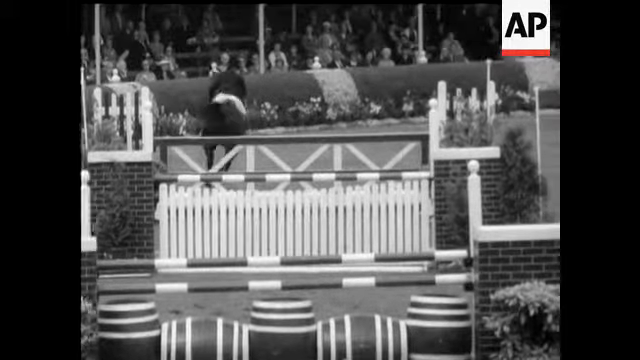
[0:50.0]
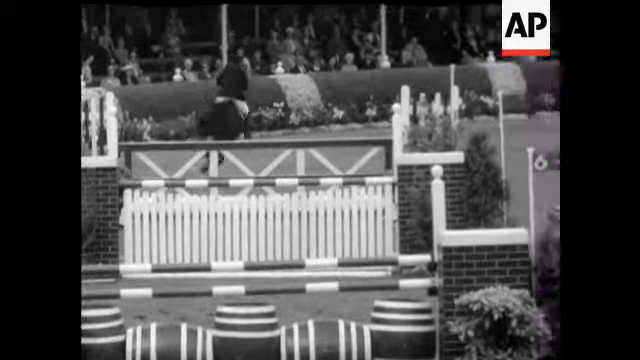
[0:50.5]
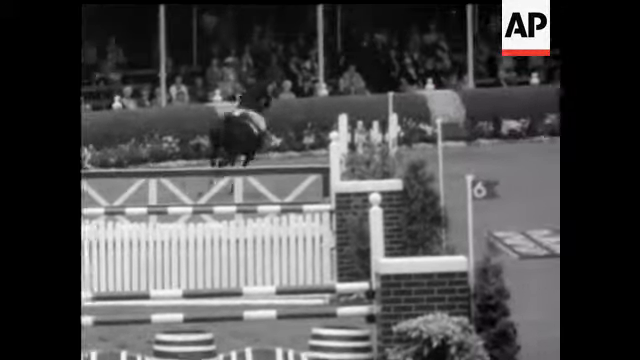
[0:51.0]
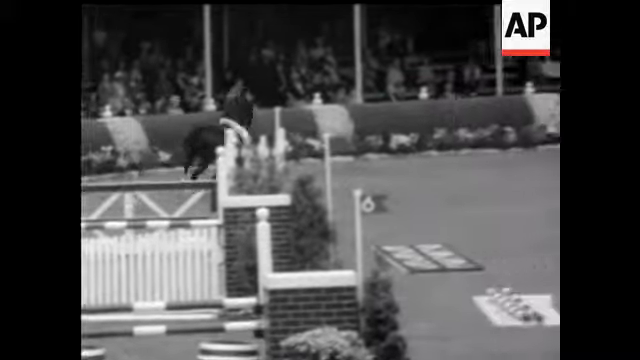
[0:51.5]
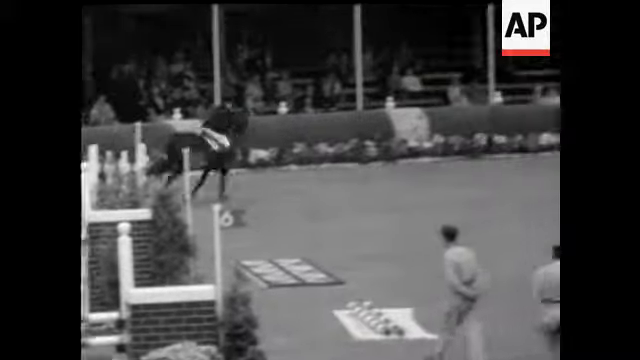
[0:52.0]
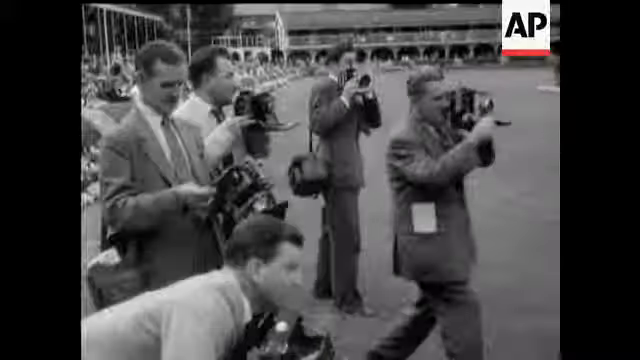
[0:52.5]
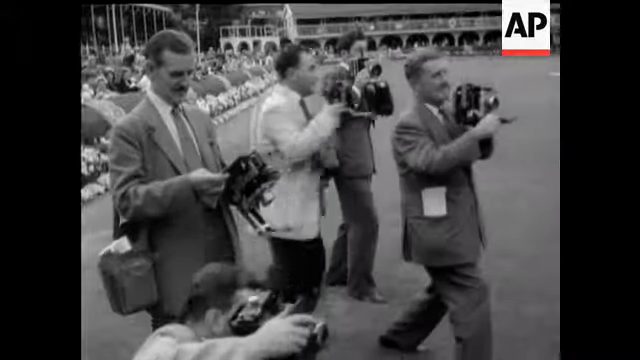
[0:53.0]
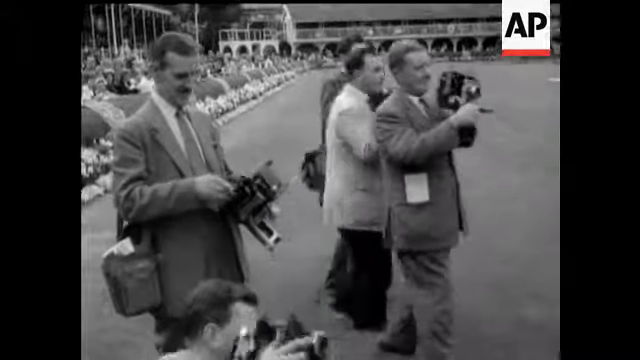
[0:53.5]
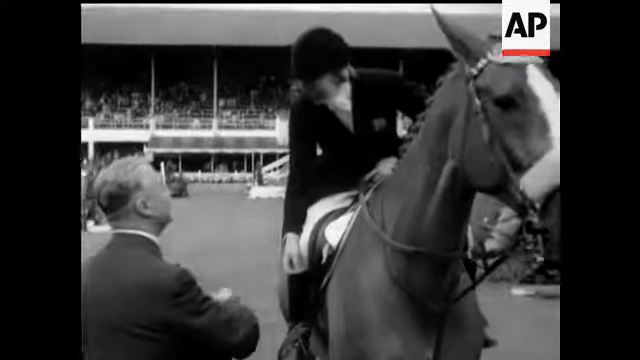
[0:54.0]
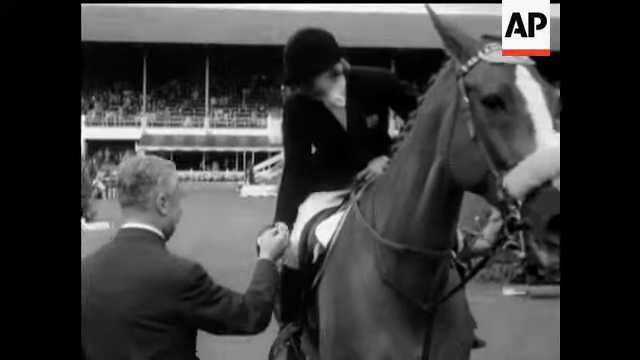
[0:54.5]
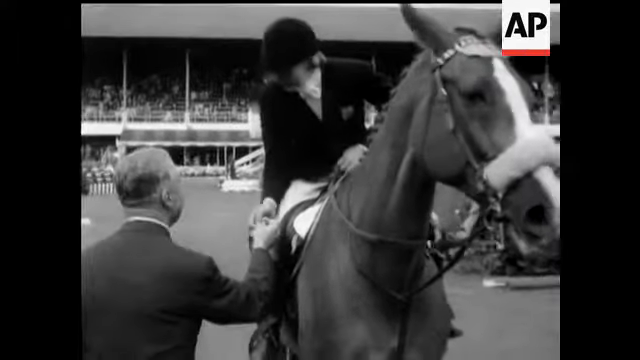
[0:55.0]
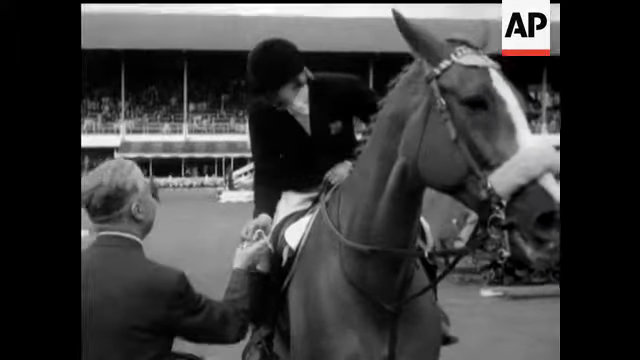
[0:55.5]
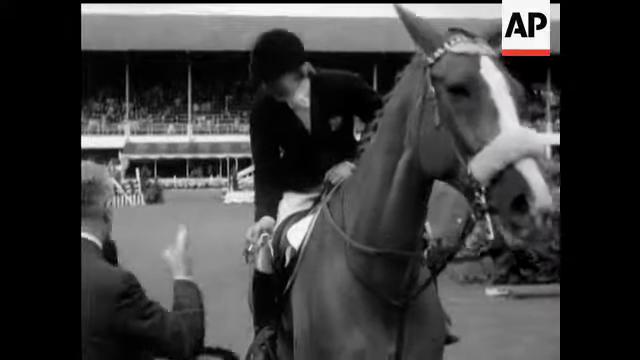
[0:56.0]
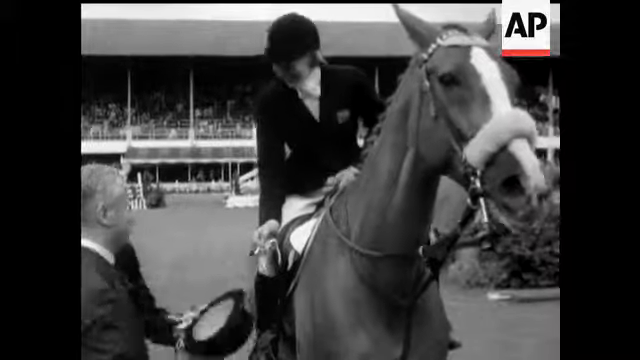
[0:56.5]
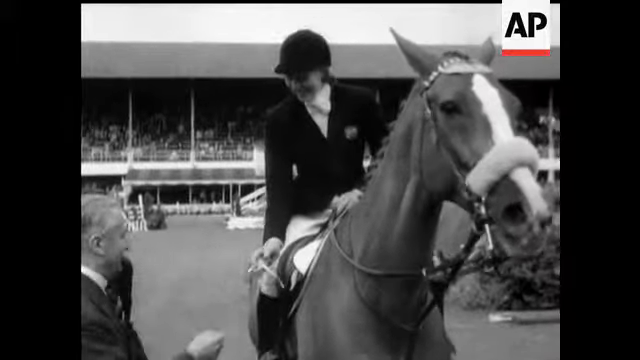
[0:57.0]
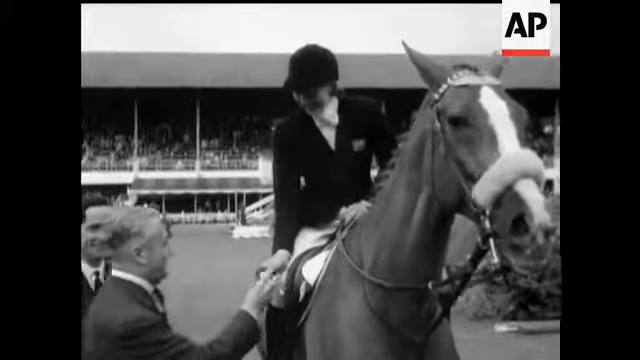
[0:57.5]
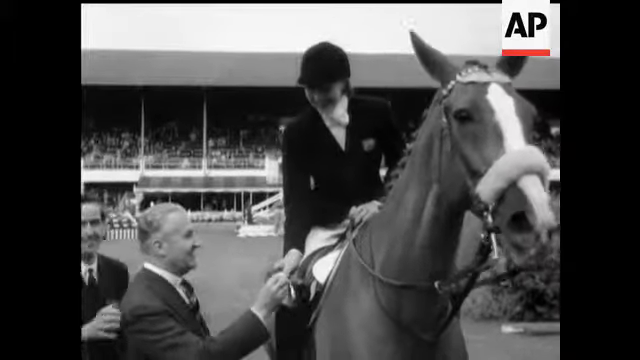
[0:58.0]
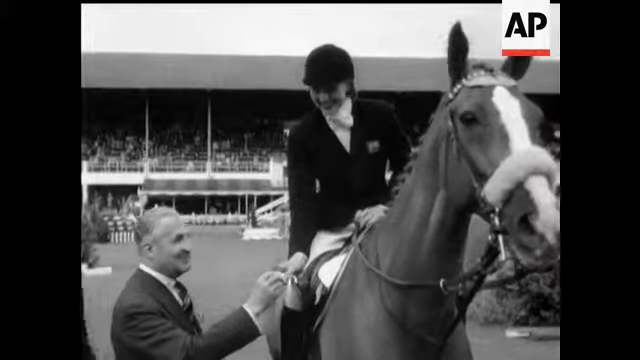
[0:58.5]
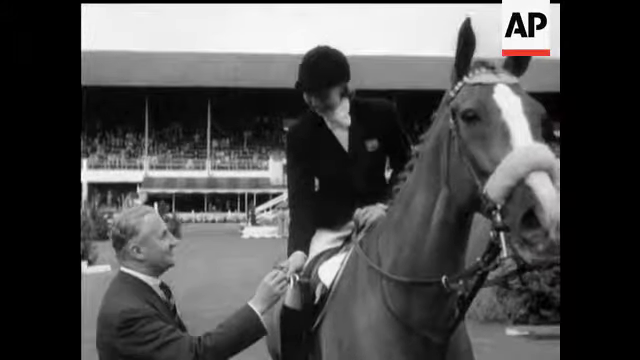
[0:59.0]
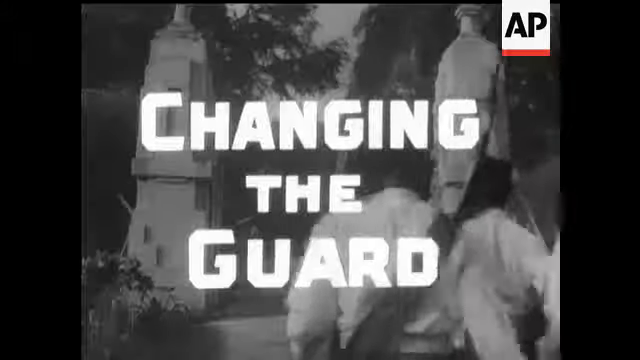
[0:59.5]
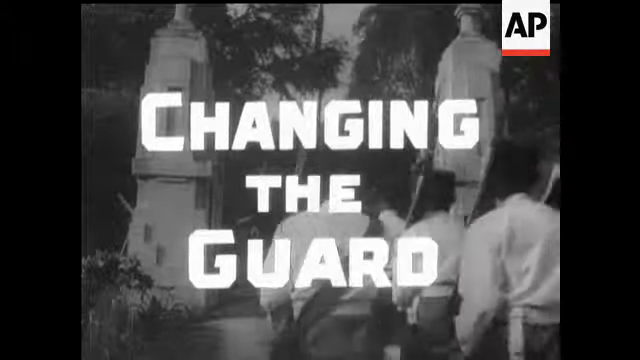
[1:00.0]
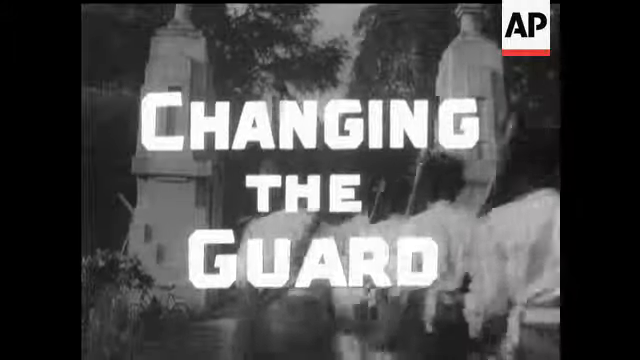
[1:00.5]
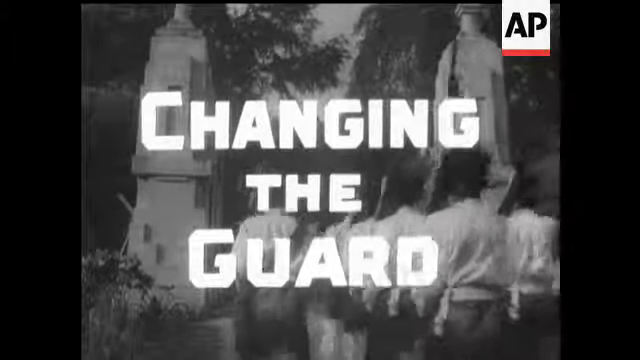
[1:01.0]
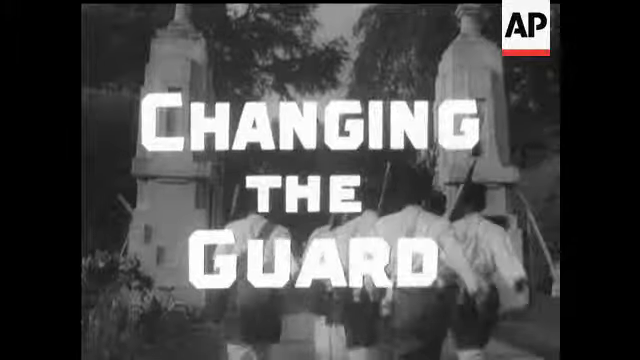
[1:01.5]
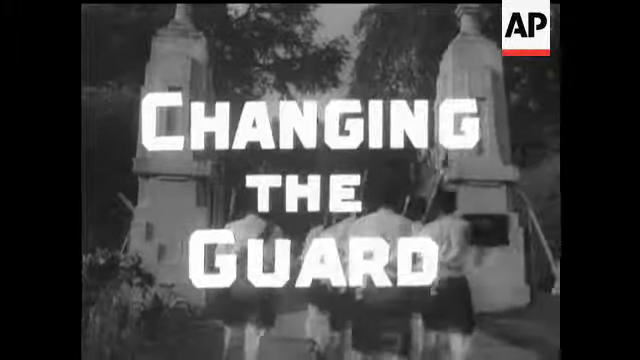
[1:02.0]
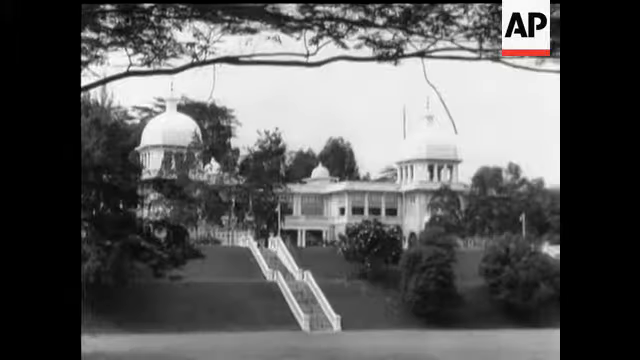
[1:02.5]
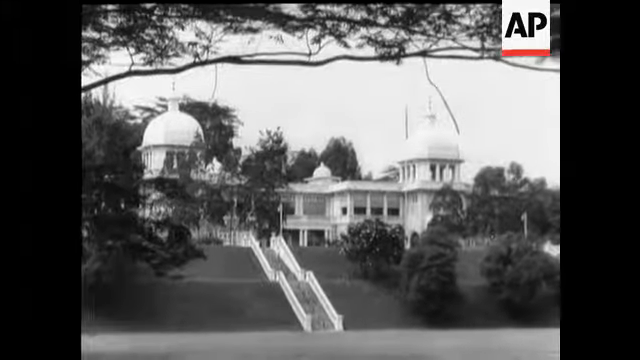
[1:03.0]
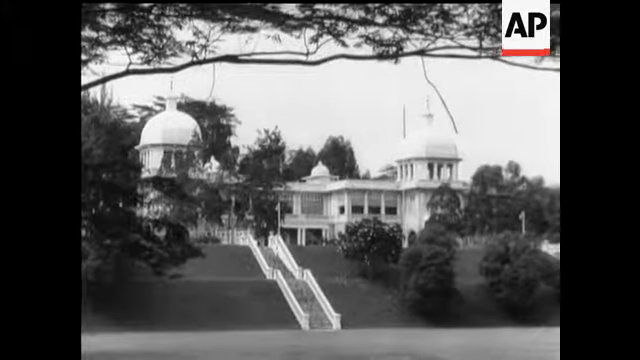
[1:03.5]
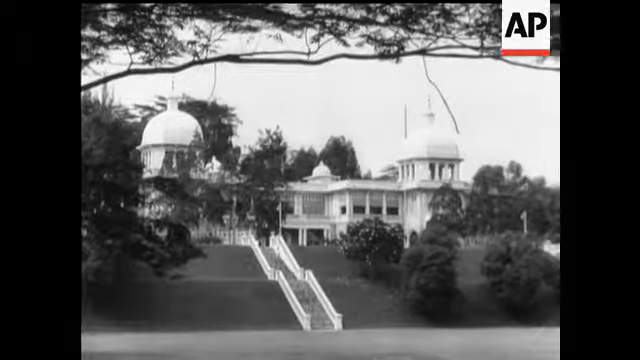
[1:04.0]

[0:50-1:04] A jockey rides a horse over many obstacles. Several photographers, wearing different coats, take photos of the scene with cameras that are quite old and use film. A young woman is on top of the horse; she is the jockey, and she receives a medal and smiles. She wears a black helmet and a black jacket with a white shirt underneath. Then the words "changing the guard" appear in large white letters against a black-and-white background.